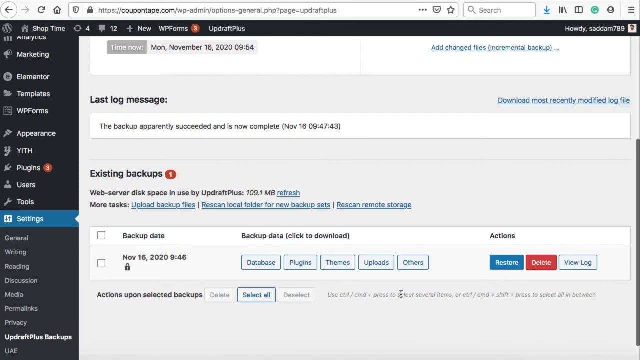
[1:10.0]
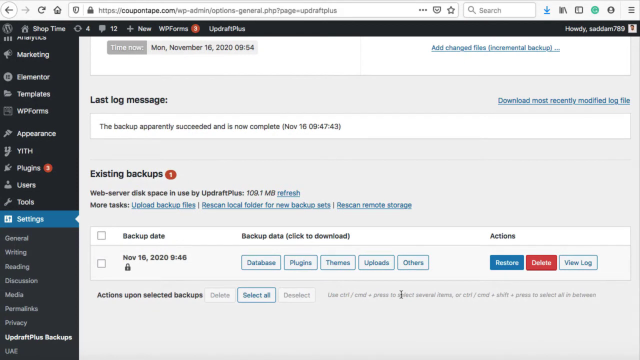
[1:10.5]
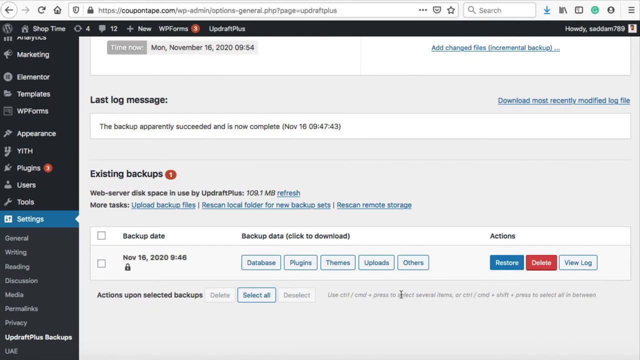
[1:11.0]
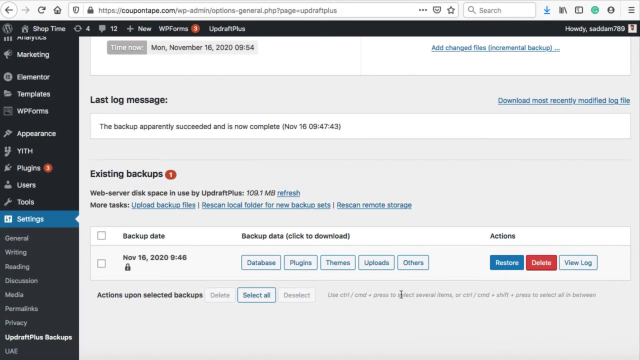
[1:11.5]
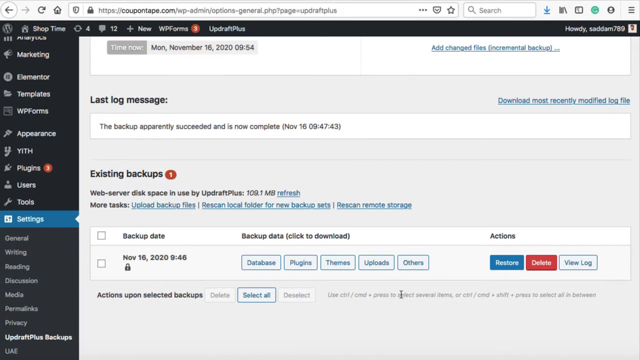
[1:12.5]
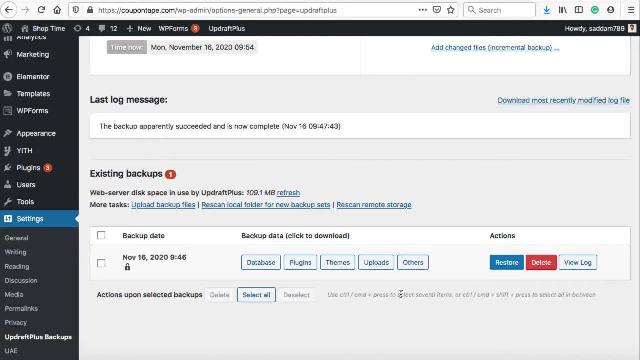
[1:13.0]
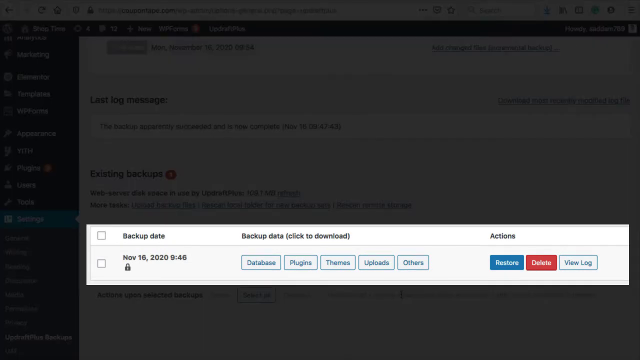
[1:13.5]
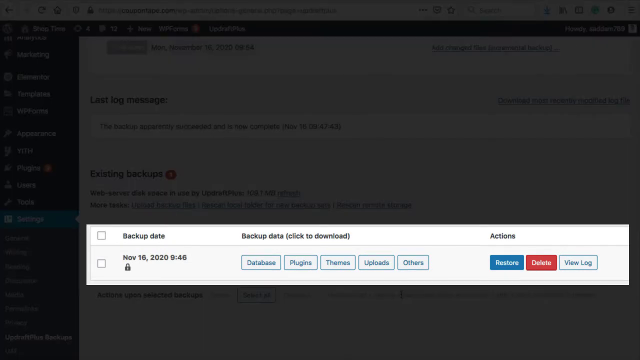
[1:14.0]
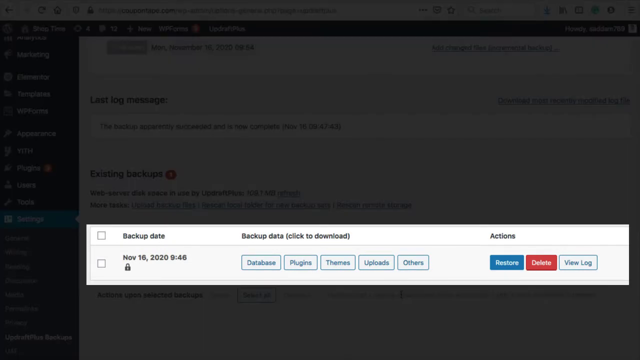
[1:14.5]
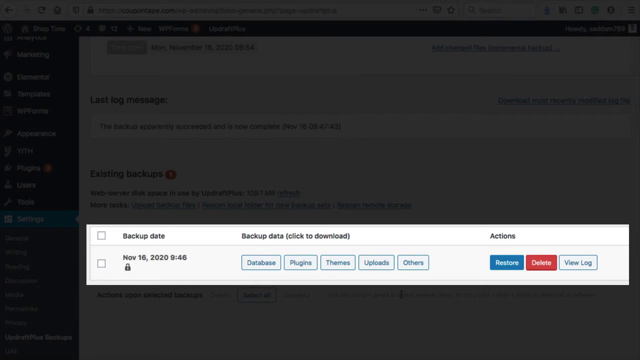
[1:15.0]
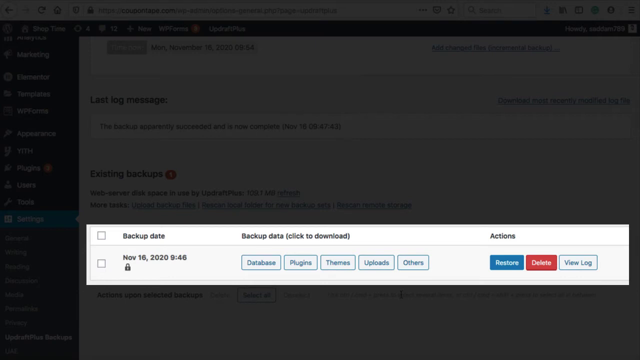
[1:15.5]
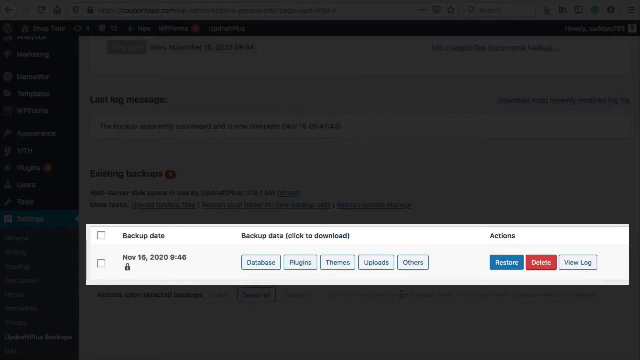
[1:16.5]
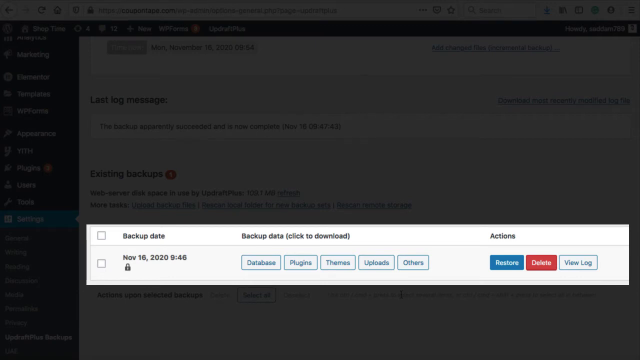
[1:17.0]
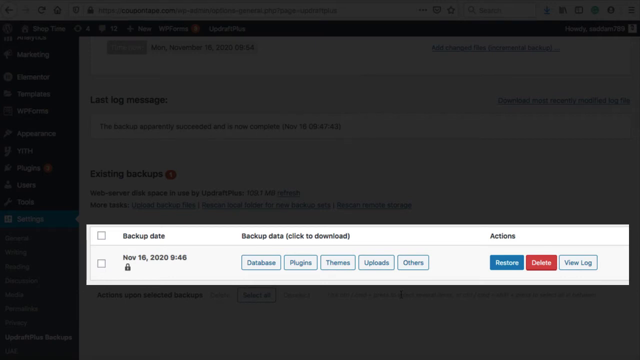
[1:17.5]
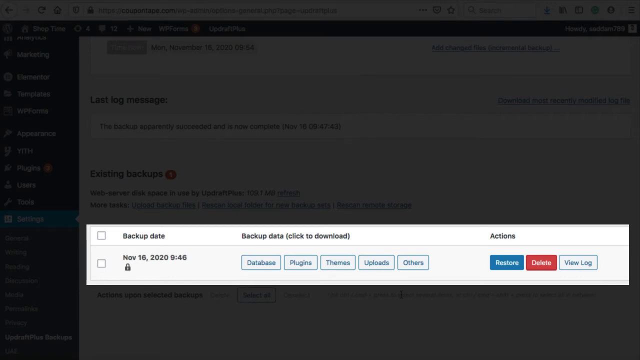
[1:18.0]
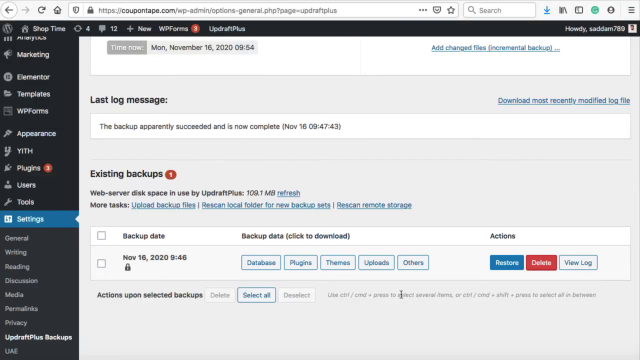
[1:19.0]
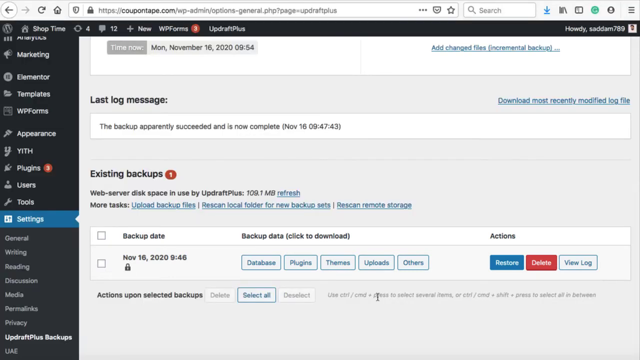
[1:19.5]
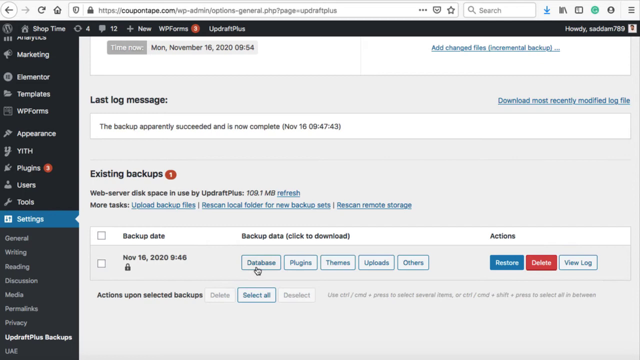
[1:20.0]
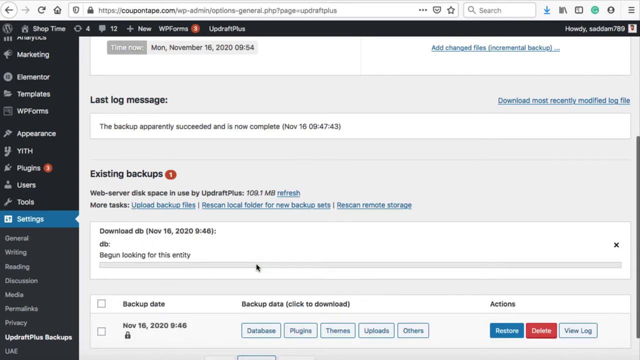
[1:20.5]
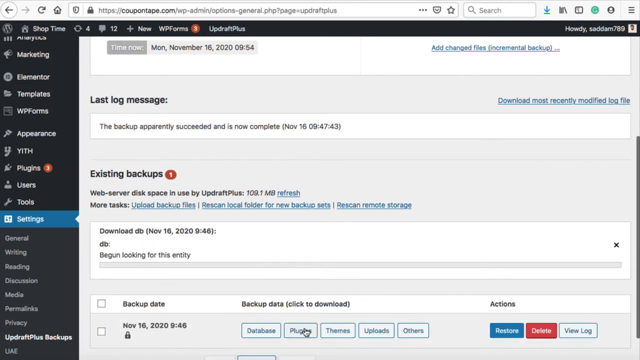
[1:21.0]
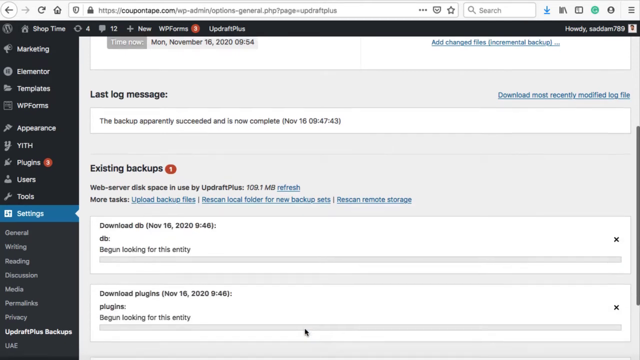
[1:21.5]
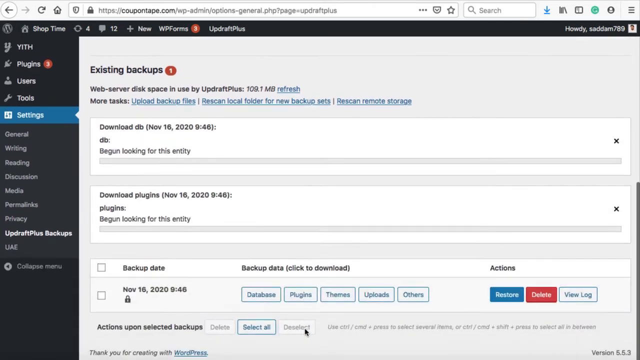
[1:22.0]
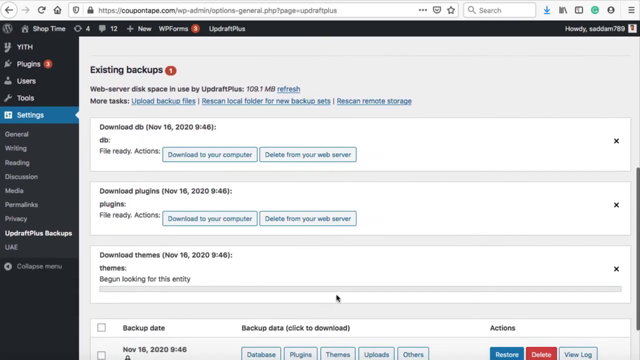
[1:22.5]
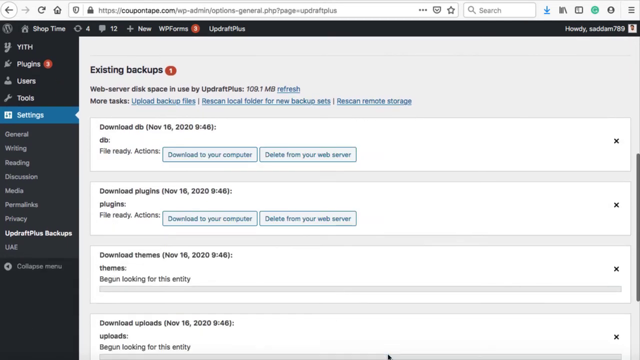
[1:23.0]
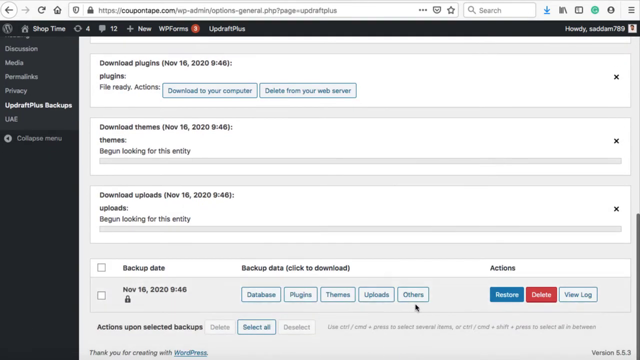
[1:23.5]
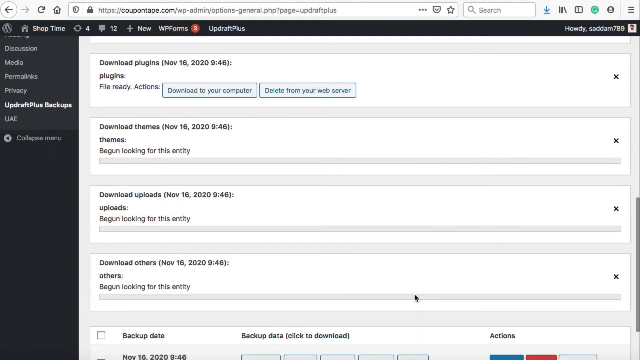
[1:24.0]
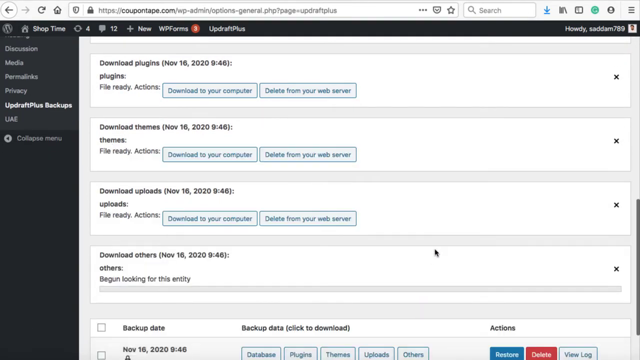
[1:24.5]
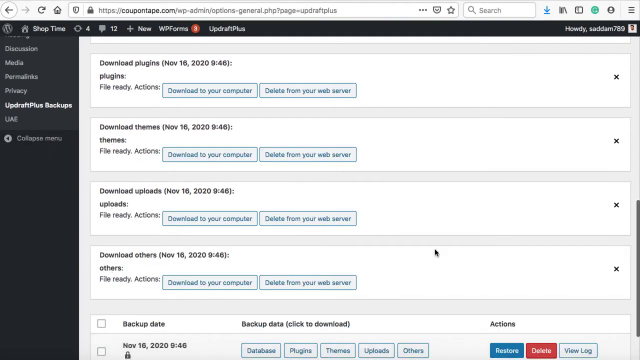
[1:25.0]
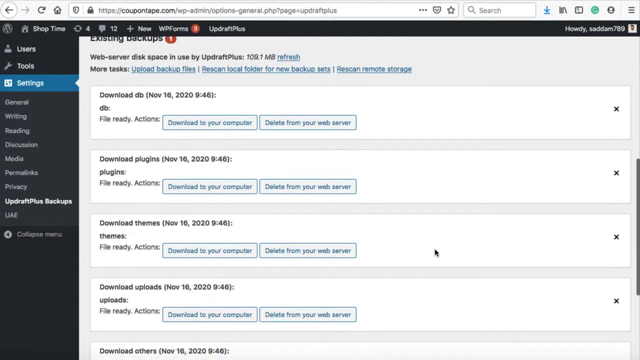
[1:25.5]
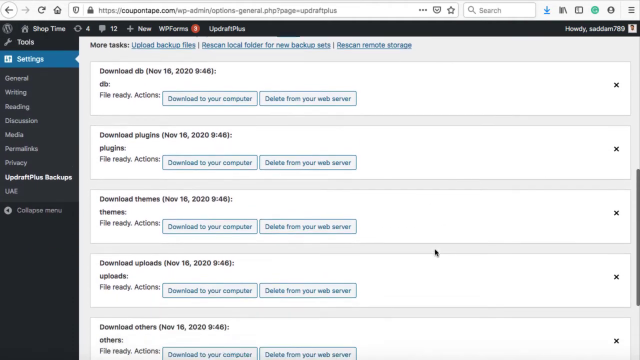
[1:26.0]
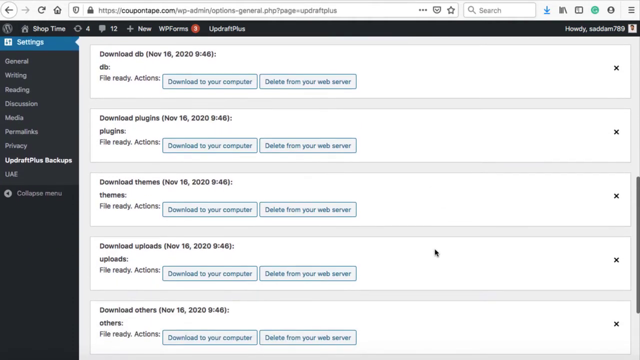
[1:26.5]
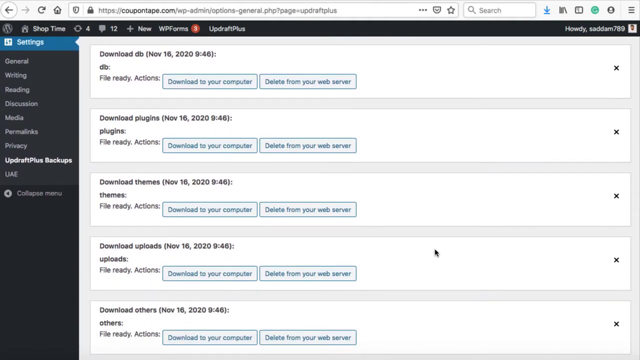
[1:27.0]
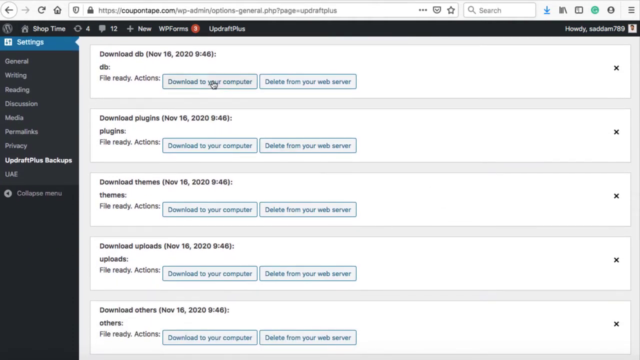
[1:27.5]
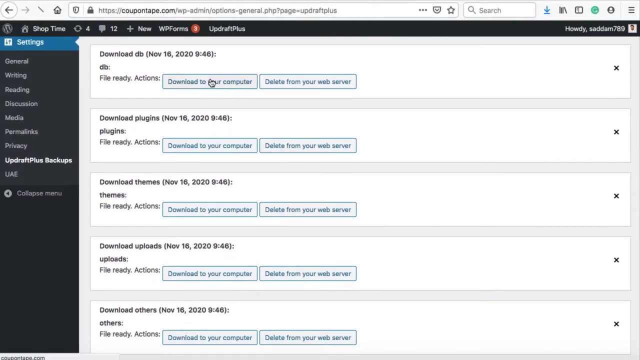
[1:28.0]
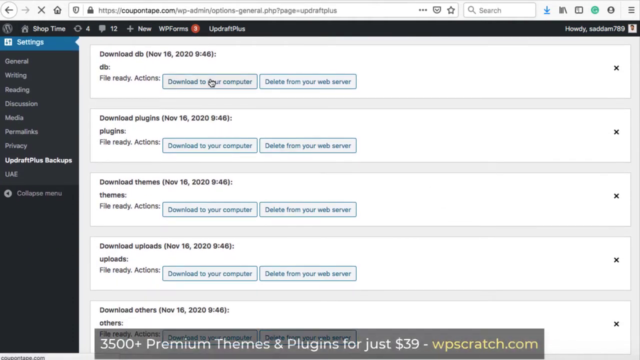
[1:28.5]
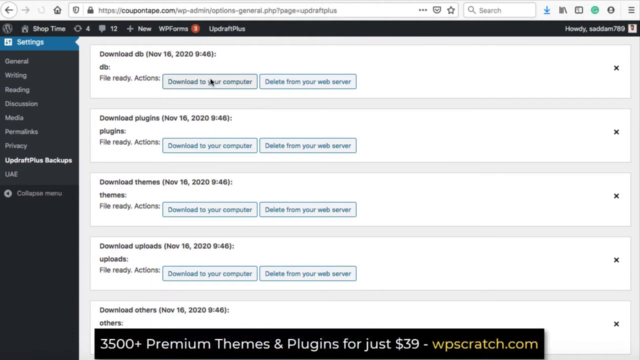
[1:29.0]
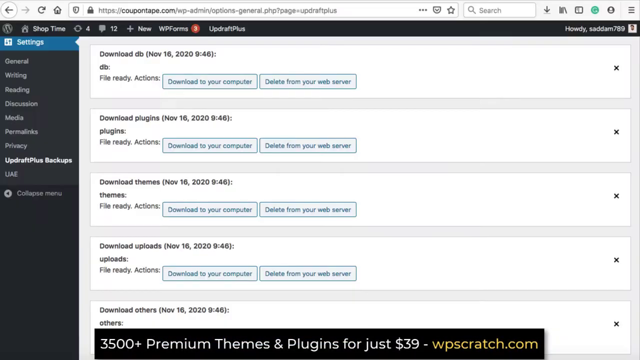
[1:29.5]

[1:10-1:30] A backup page shows the text "last log message" in black over a white rectangle. Inside the rectangle it says "the backup apparently succeeded and is now complete" with a date next to it. A blue link reading "download most recently modified log file" is above this rectangle. Below is the header "existing backups," with columns for backup date, backup data, and actions; the actions are restore, delete, or view log, along with more buttons for more information. The screen then highlights the backup date table in white while the rest of the screen goes black. Under backup data, buttons in blue text on white backgrounds say database, plugins, themes, upload, and others. The cursor clicks database, and a loading screen appears with options "download to your computer" and "delete from your web server." More loading screens appear and more data is downloaded. The person clicks "download to your computer," and a black rectangular bar appears at the bottom of the screen stating that the file was downloaded to their computer.